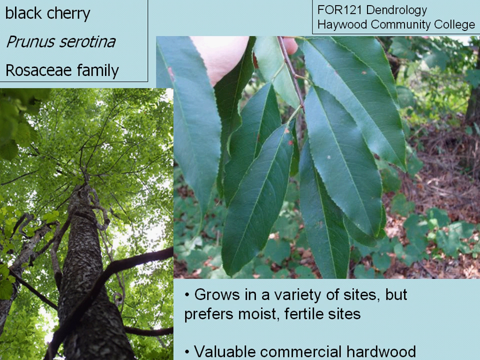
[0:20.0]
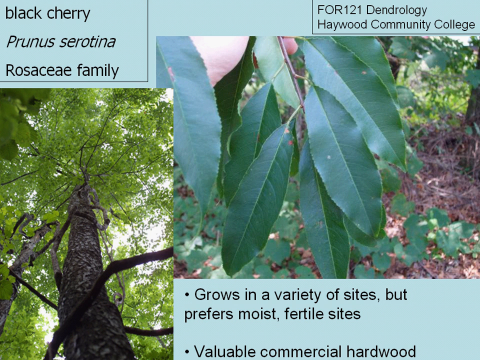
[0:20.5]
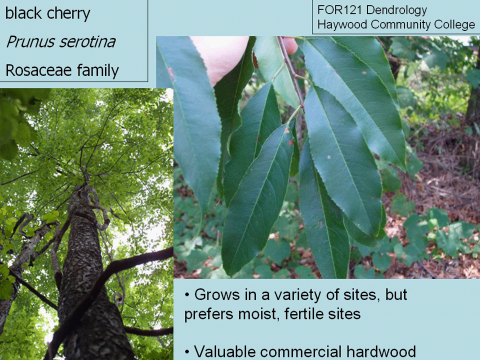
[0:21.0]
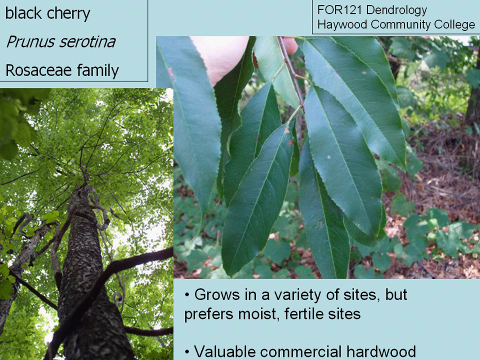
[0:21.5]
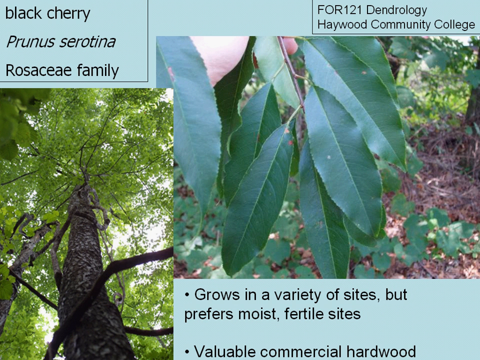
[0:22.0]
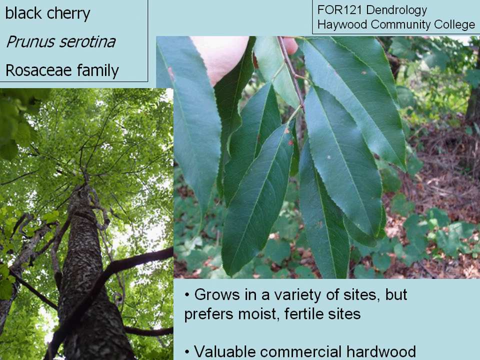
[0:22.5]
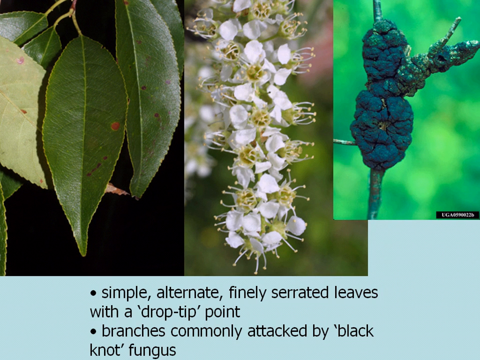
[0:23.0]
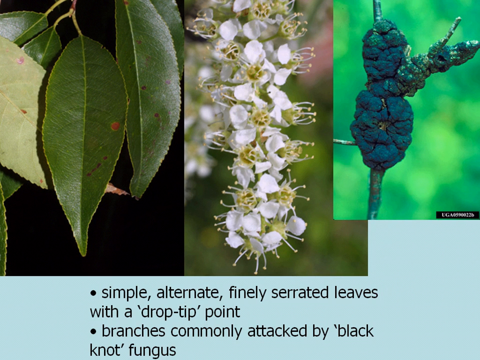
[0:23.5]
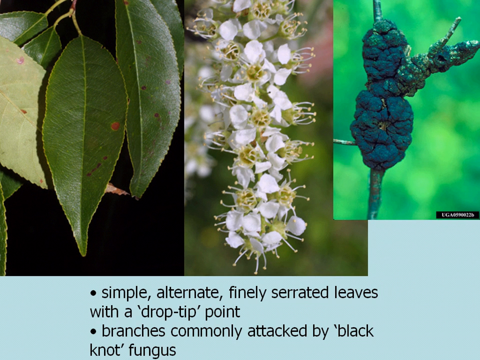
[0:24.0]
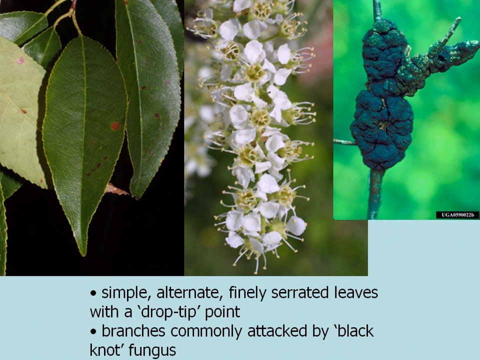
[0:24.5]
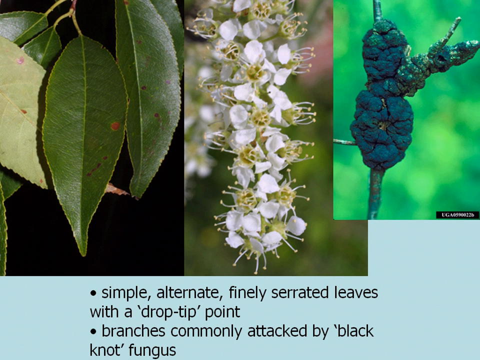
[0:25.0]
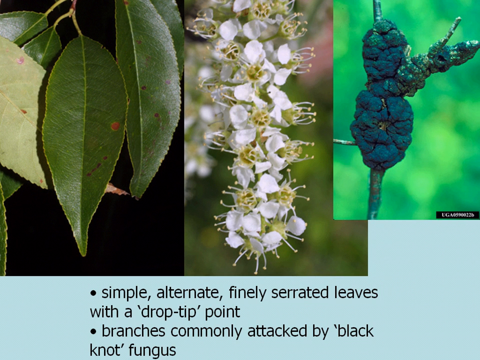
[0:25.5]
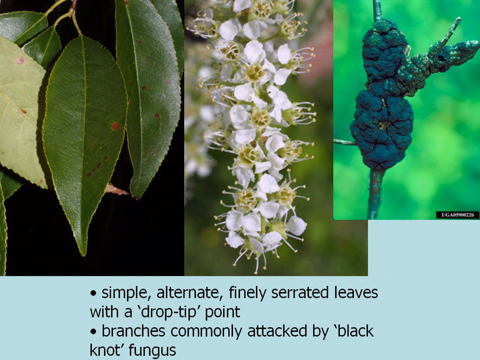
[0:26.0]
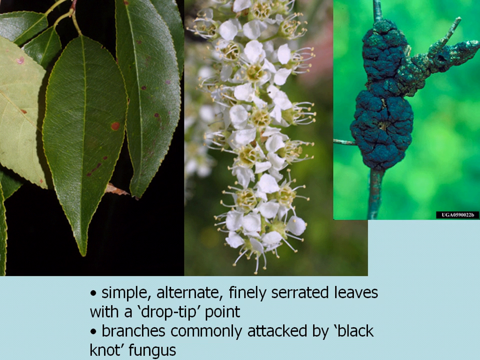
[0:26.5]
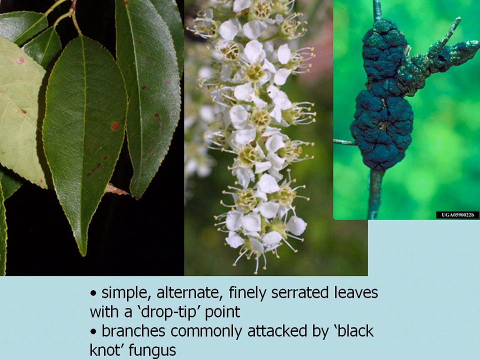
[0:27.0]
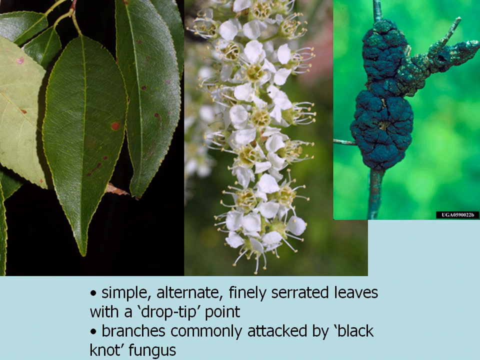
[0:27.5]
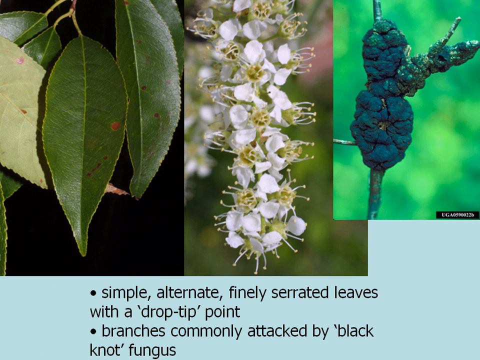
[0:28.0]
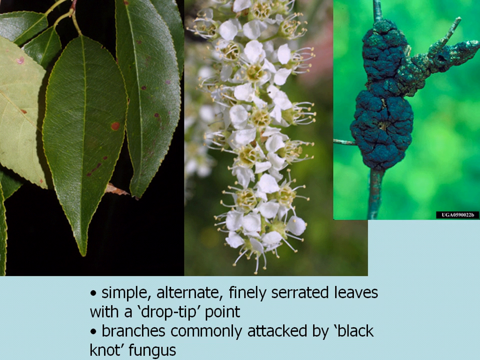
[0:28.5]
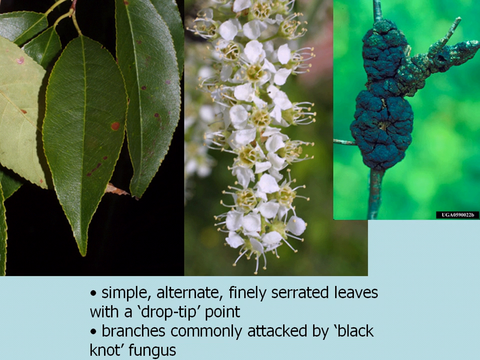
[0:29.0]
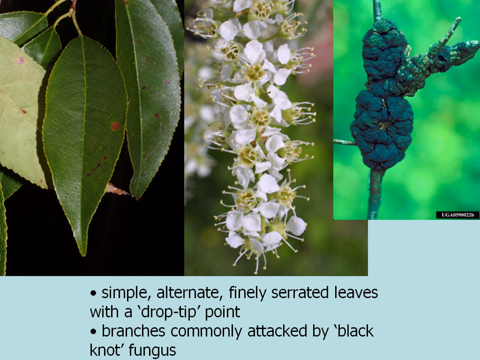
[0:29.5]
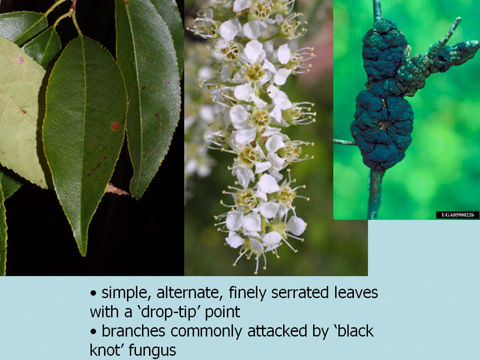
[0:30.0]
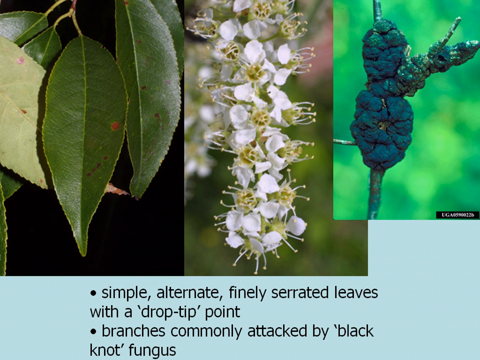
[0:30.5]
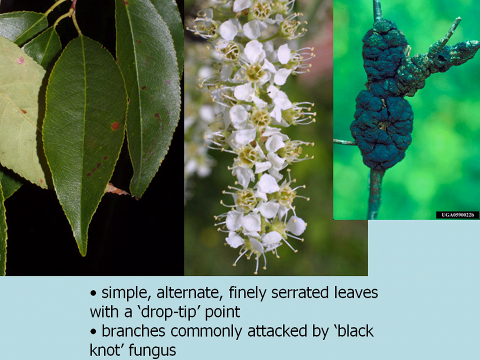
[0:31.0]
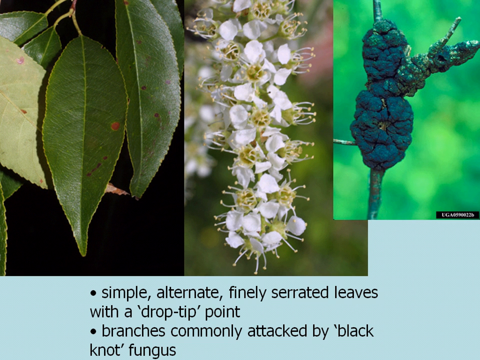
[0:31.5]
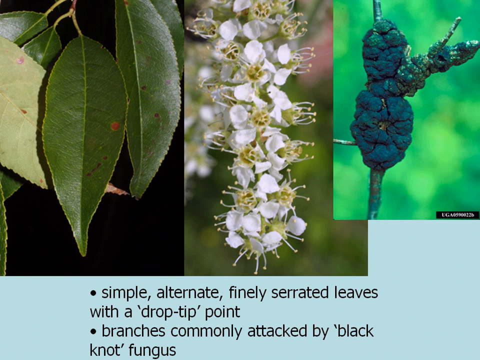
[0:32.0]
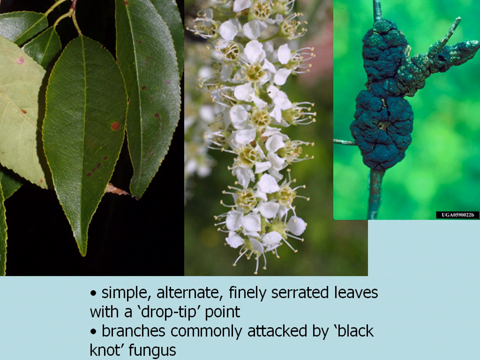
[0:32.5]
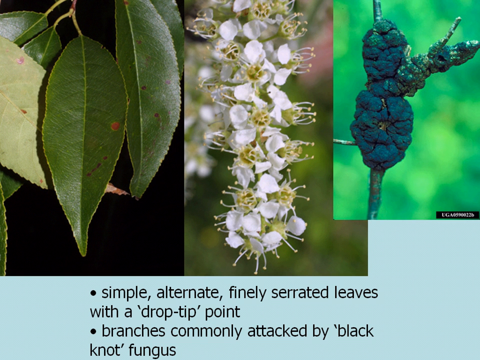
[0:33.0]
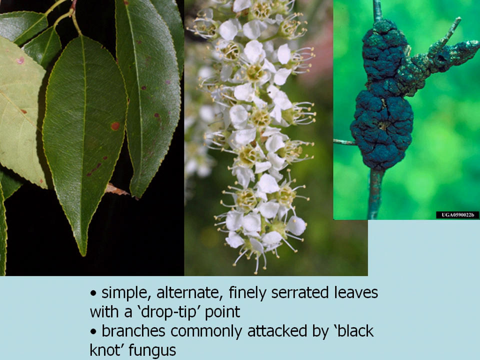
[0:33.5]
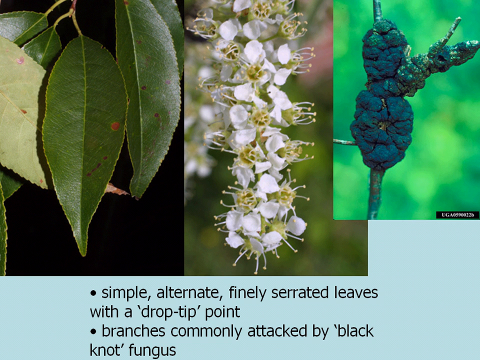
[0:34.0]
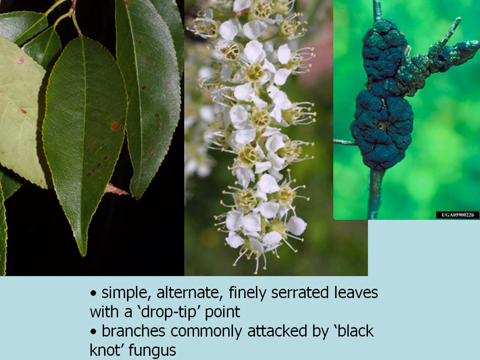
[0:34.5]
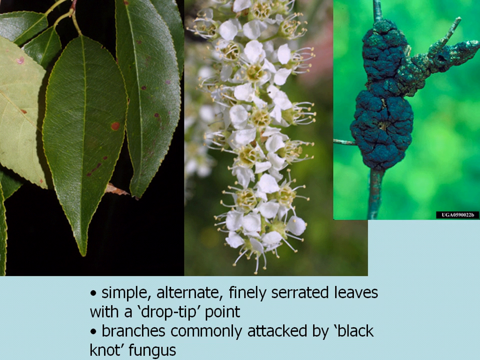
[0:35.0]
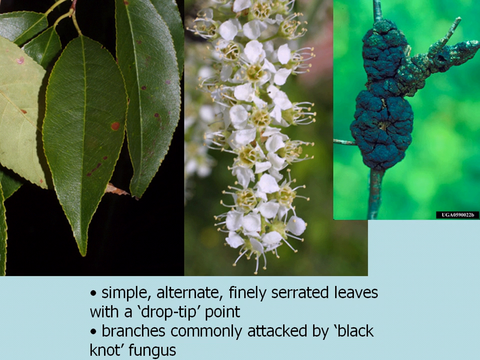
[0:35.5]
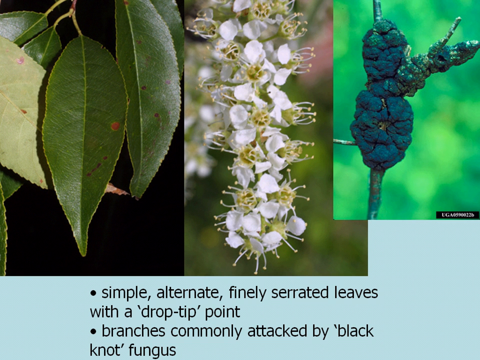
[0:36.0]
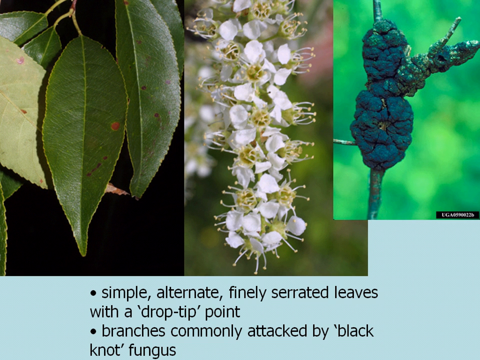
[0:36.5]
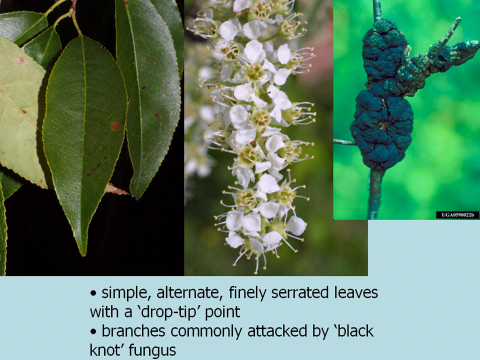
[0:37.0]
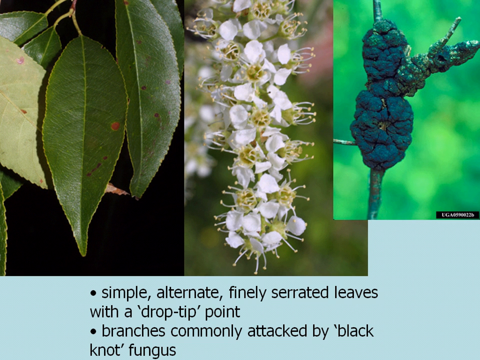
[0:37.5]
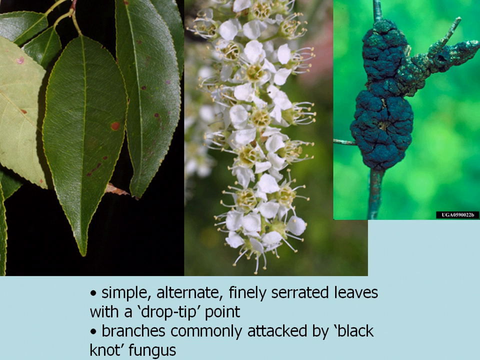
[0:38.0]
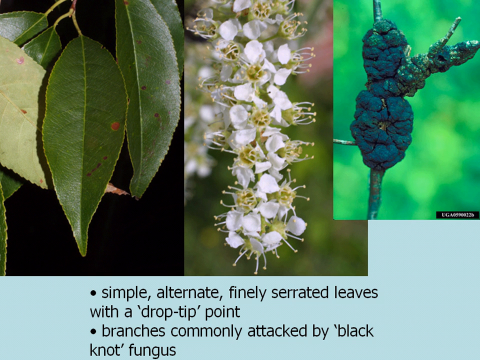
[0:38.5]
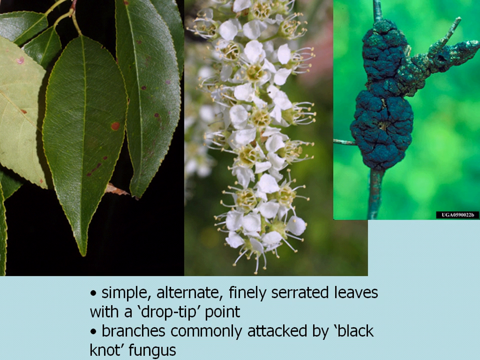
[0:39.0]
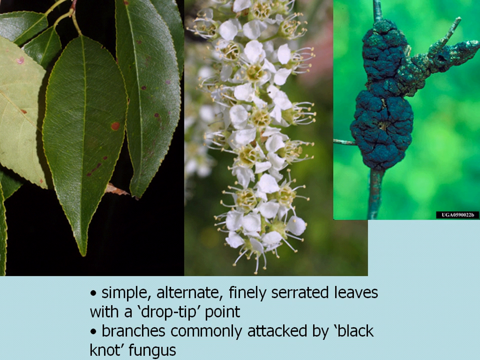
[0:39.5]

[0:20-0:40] The pictures and text change, and three pictures now appear. The first shows green leaves with blackish-brown dots. The middle one shows white flowers with petals. The third shows black knot fungus, in a blue colour against a green background. Below are two bullet points: "simple alternate finely serrated leaves with a drop tip point" and "branches commonly attacked by black knot fungus." Nothing else appears besides the three pictures and the two bullet points.